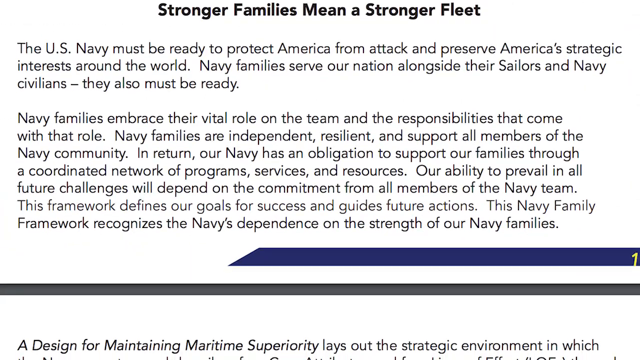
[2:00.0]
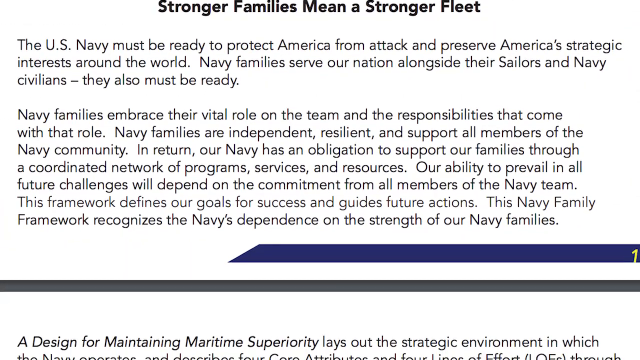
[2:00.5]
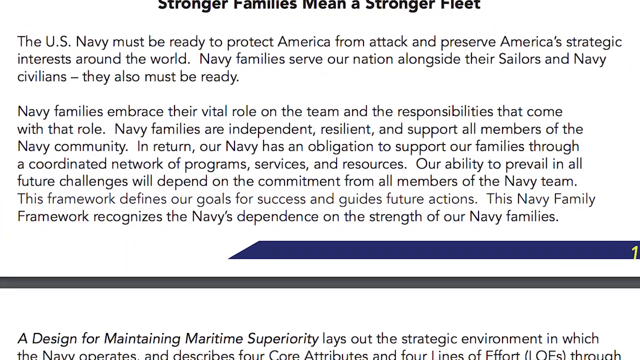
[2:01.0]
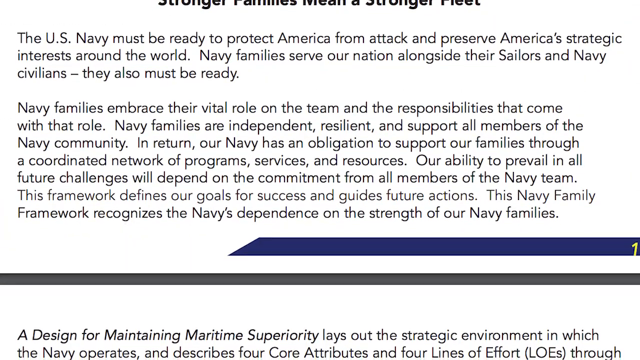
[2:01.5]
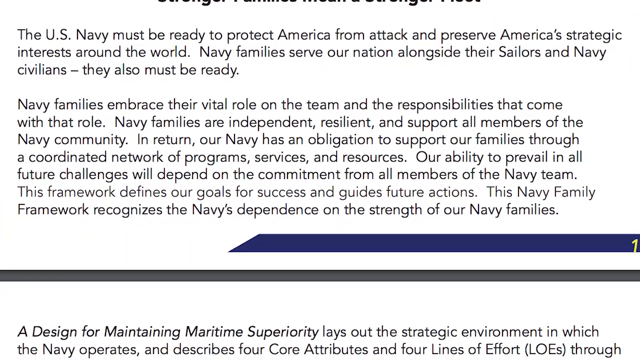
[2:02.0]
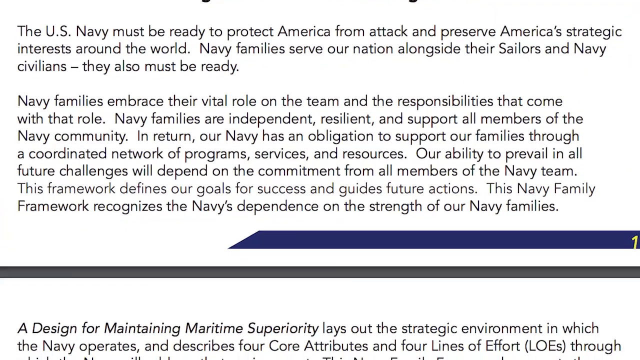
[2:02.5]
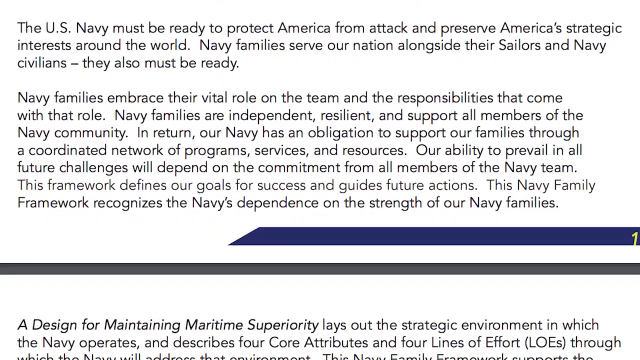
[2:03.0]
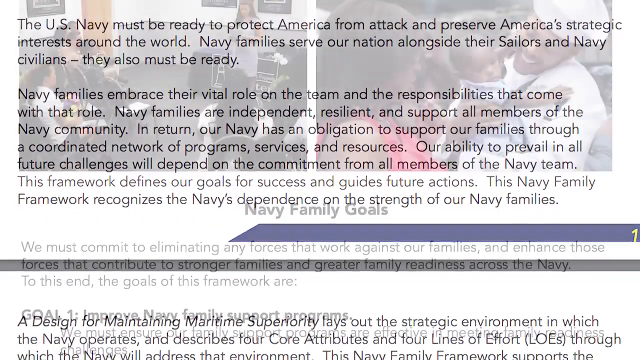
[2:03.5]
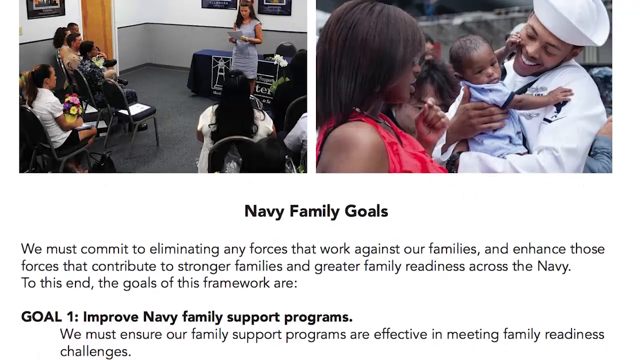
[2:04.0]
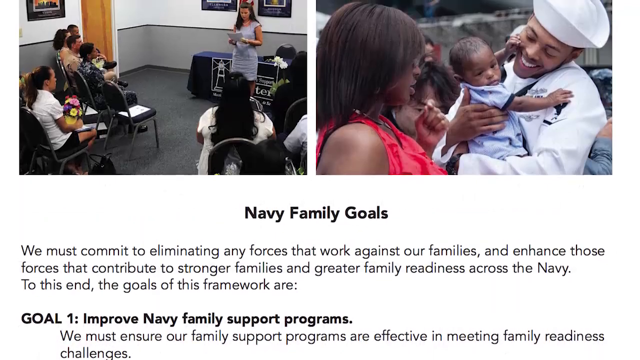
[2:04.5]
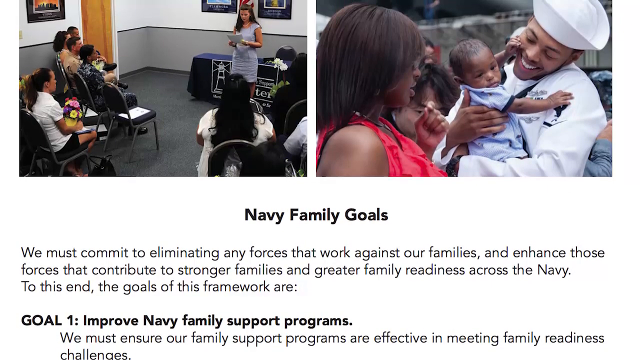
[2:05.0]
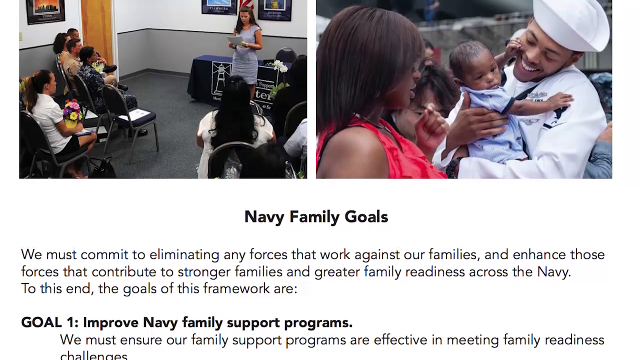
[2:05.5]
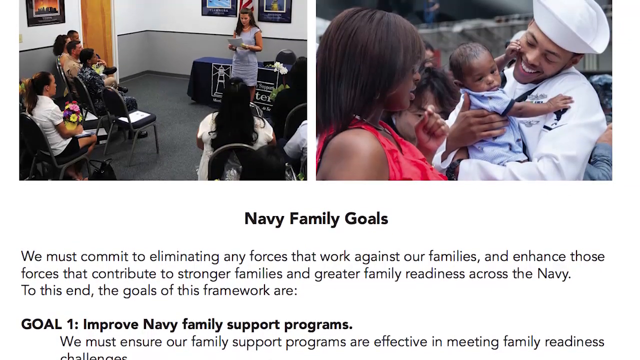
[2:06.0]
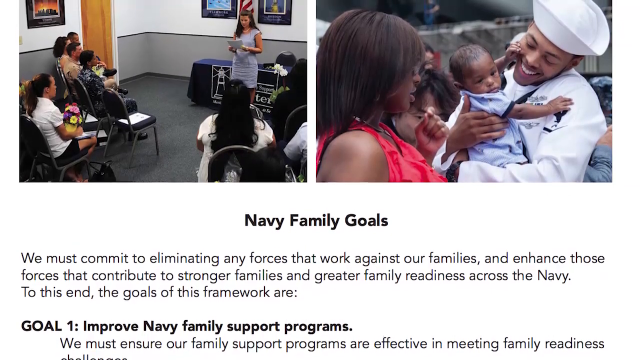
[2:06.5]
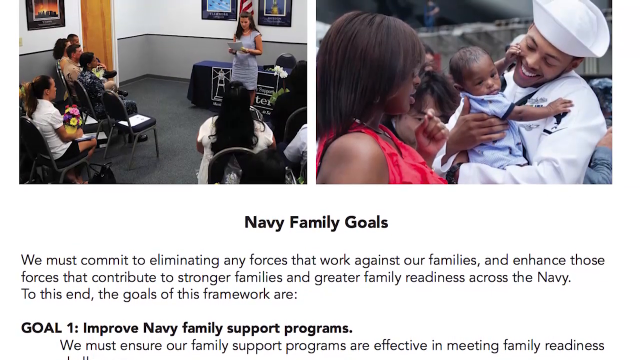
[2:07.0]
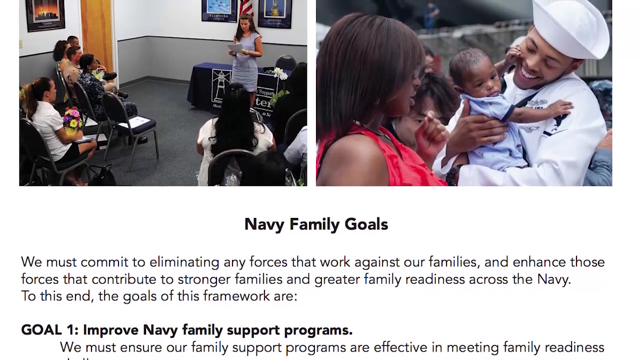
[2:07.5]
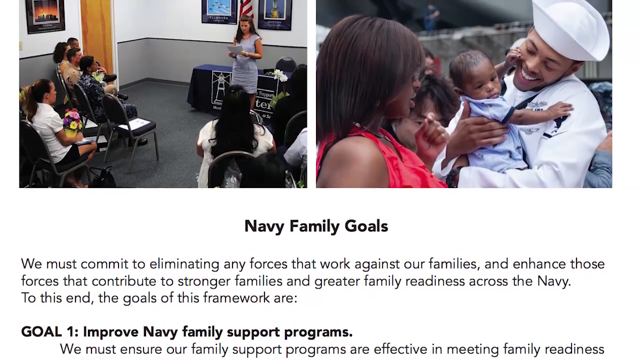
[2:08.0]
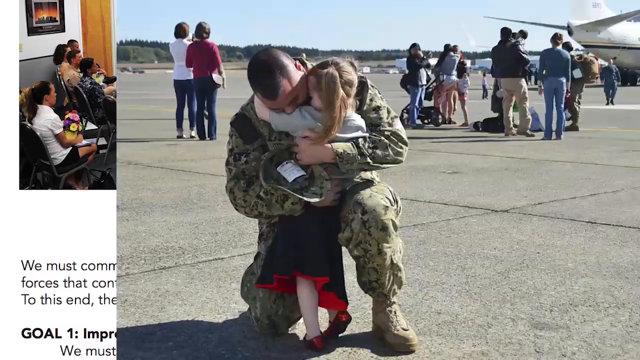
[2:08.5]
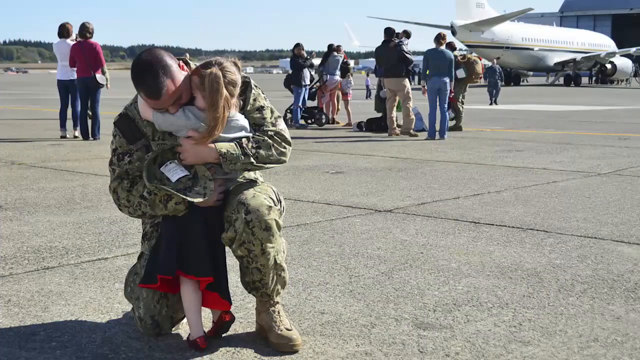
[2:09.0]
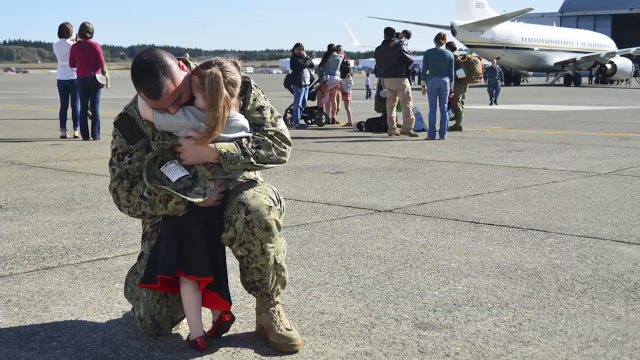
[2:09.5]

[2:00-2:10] The article reads: "stronger families mean a stronger fleet. The US Navy must be ready to protect America from attack and persevere America's strategic interests around the world. Navy families serve our nation alongside their sailors and Navy civilians. They also must be ready. Navy families embrace their vital role on the team and the responsibilities that comes with that role. Navy families are independent, resilient, and support all members of the Navy community. In return, our Navy has an obligation to support our families through a coordinated network of programs, services, and resources. Our ability to prevail in all future challenges will depend on the commitment from all members of the Navy team. This framework defines our goal for success and guide future actions. This Navy family framework recognizes the Navy's dependence on the strength of our Navy families."